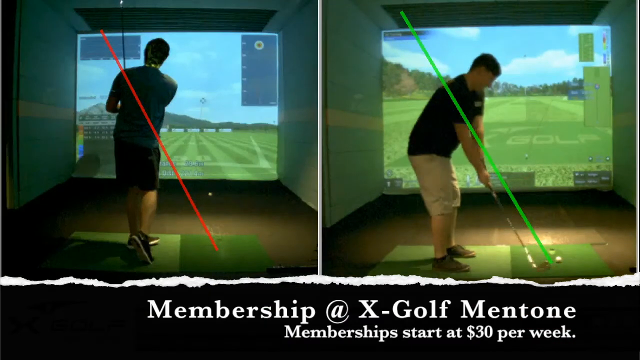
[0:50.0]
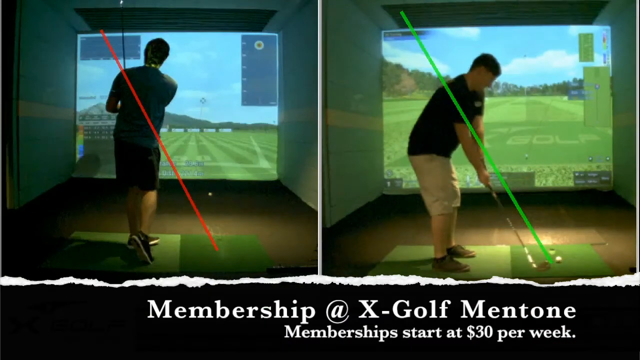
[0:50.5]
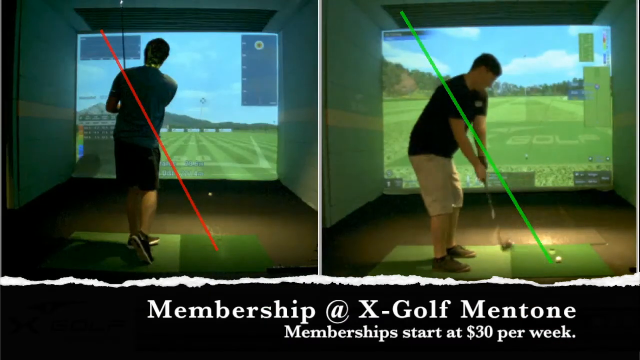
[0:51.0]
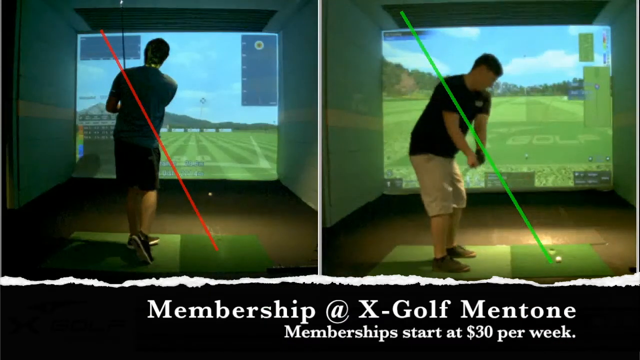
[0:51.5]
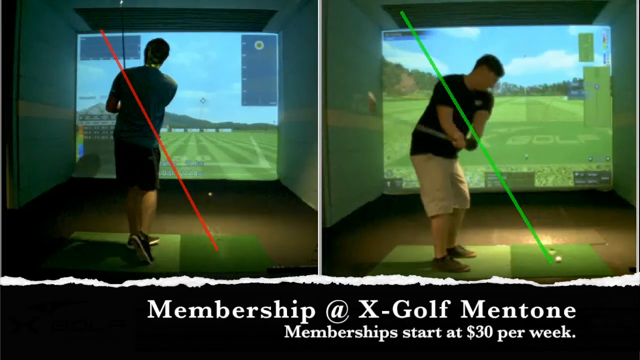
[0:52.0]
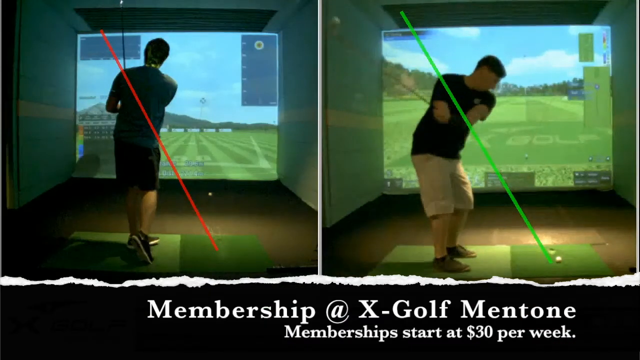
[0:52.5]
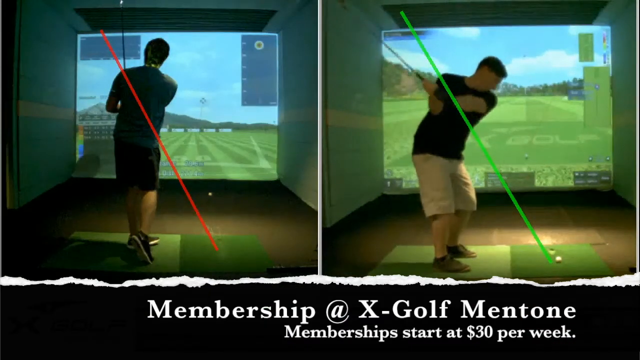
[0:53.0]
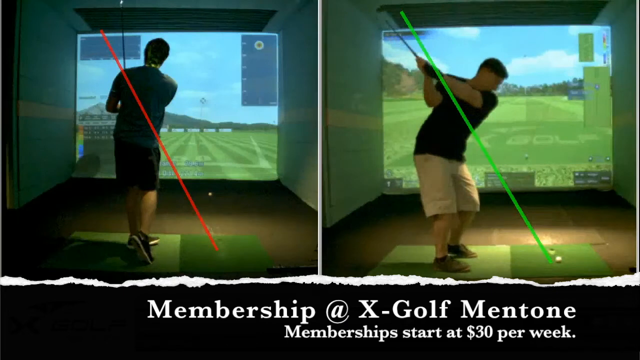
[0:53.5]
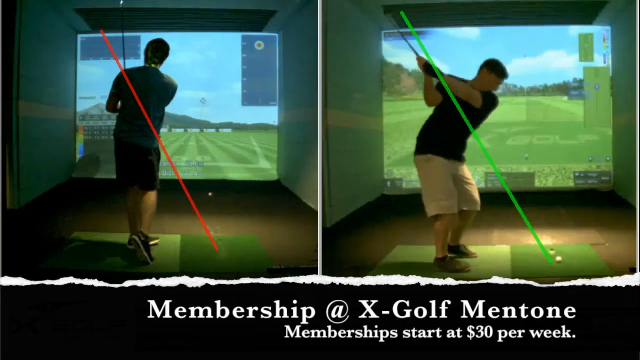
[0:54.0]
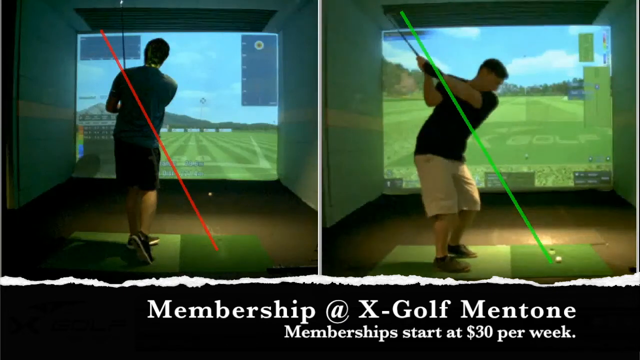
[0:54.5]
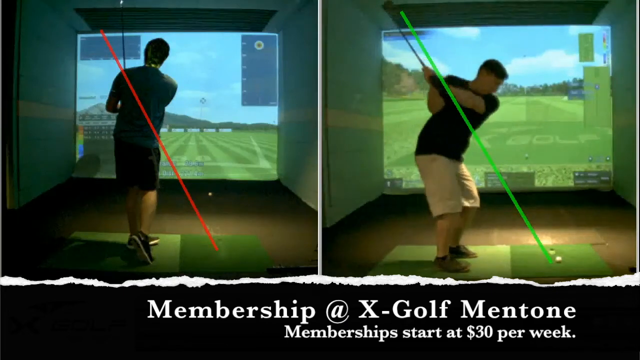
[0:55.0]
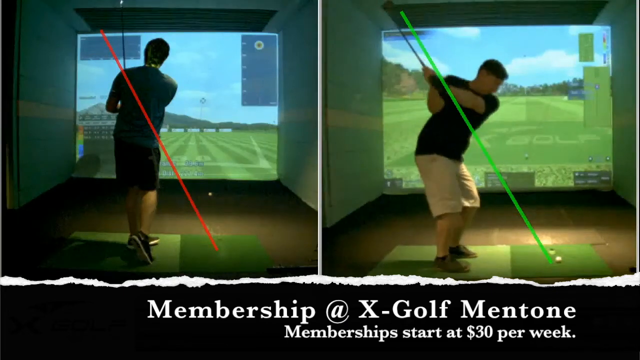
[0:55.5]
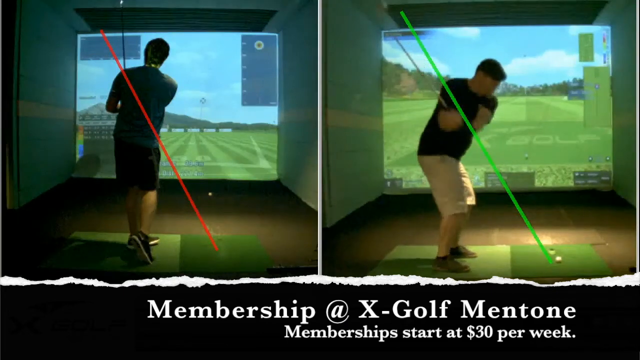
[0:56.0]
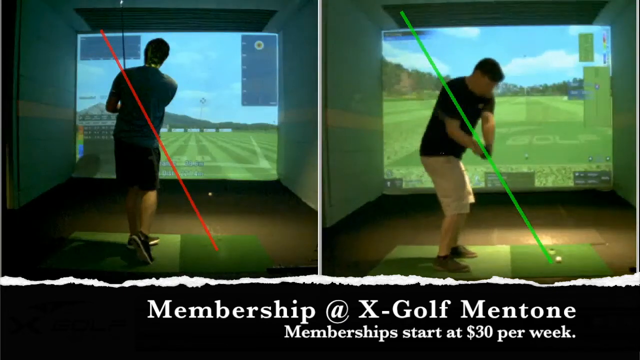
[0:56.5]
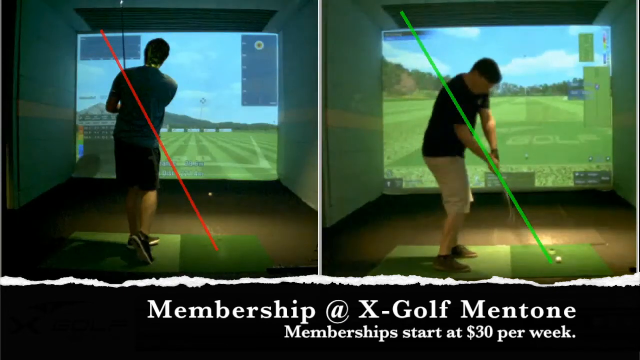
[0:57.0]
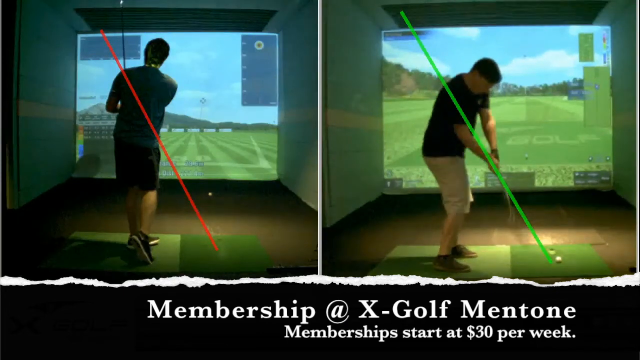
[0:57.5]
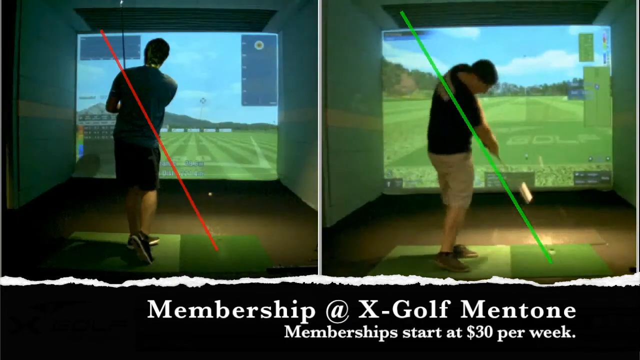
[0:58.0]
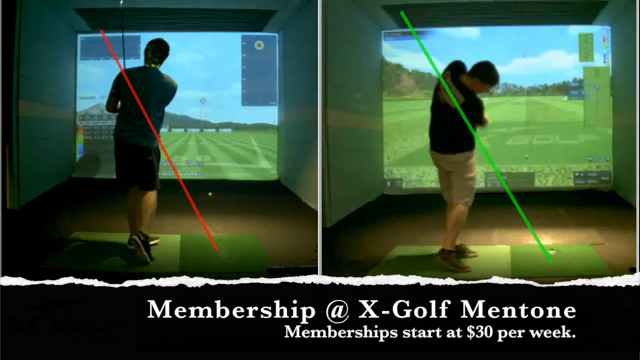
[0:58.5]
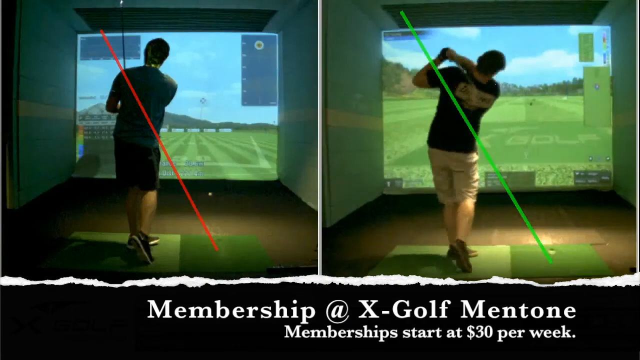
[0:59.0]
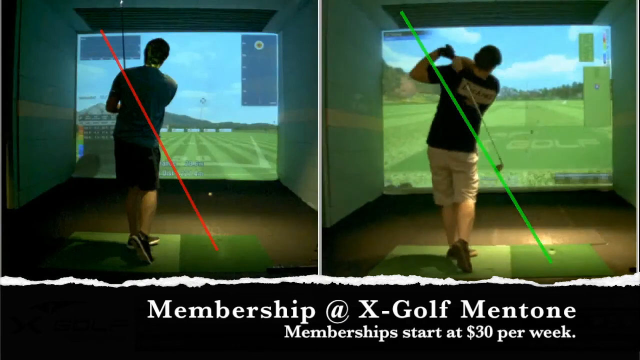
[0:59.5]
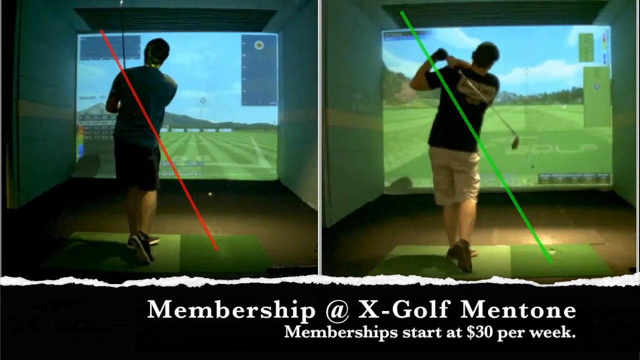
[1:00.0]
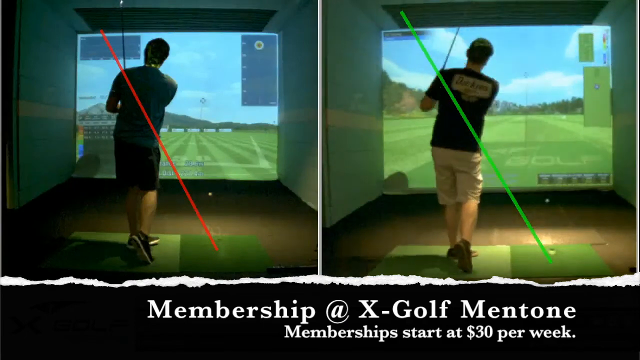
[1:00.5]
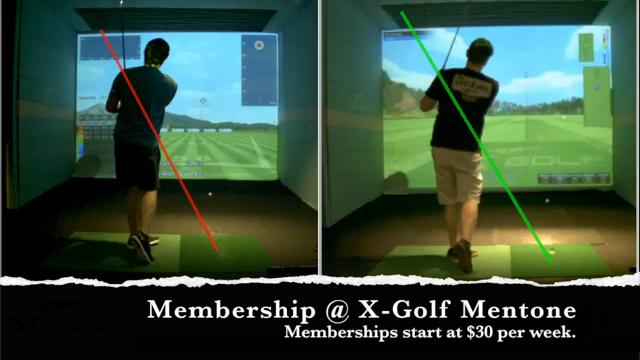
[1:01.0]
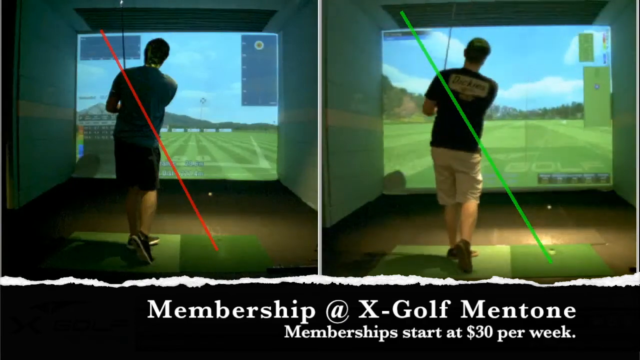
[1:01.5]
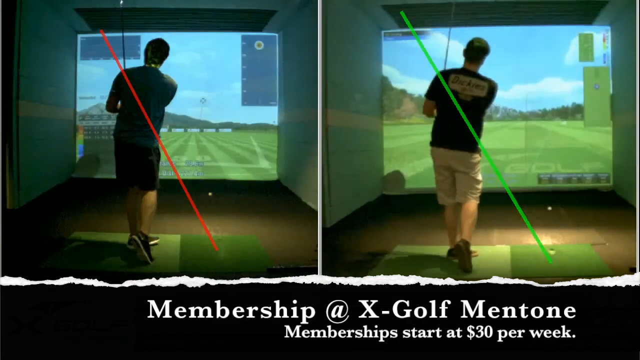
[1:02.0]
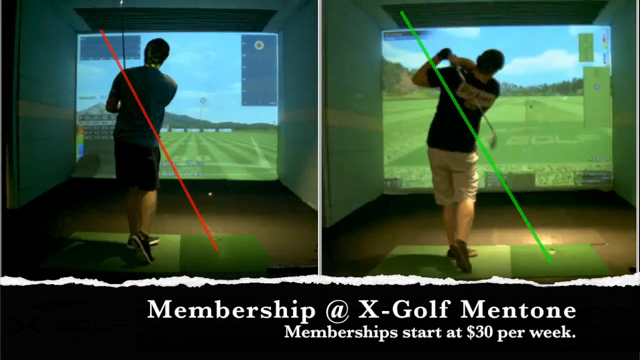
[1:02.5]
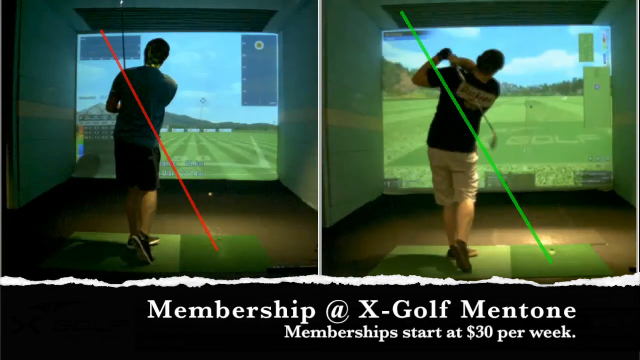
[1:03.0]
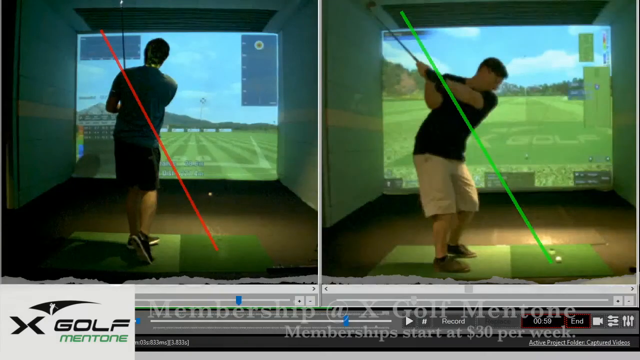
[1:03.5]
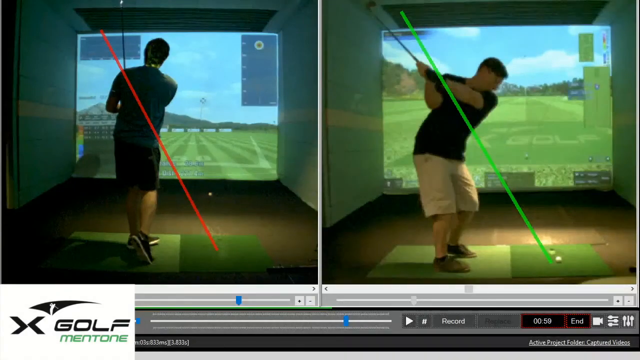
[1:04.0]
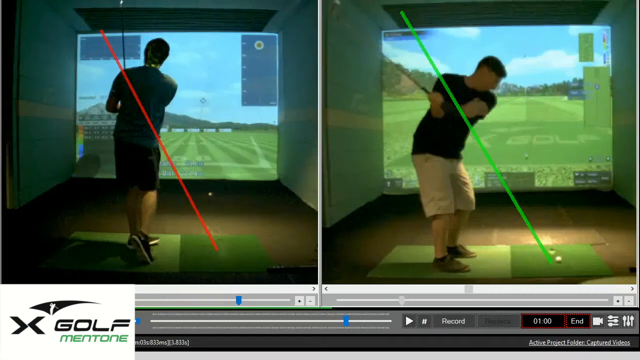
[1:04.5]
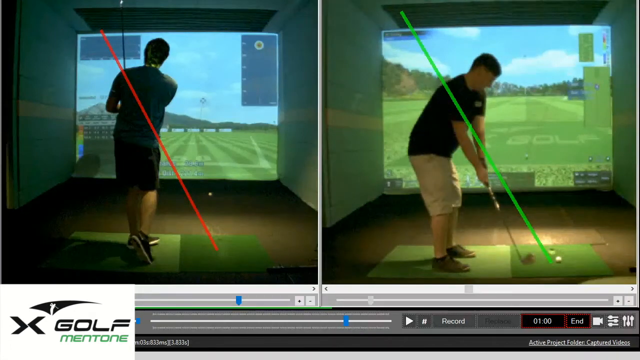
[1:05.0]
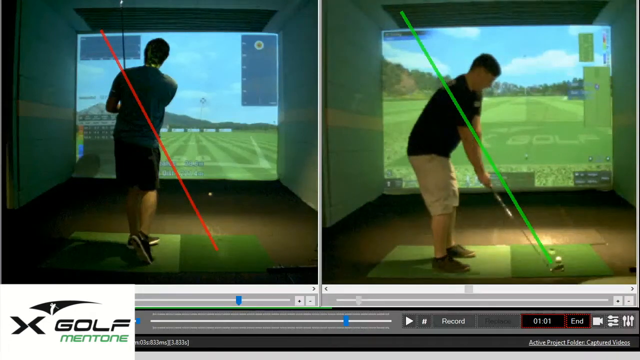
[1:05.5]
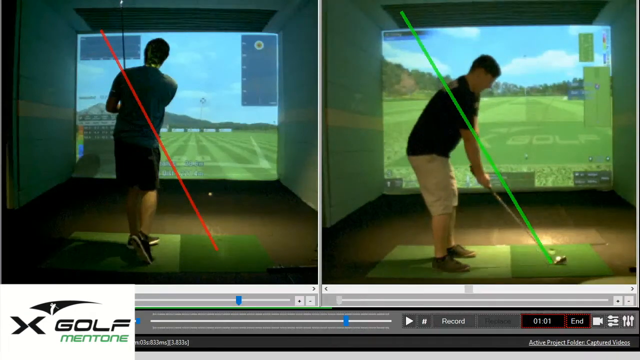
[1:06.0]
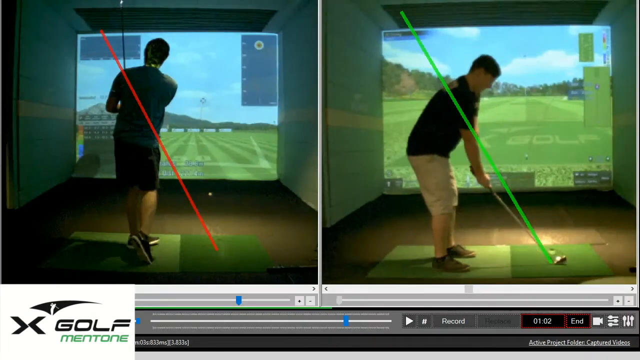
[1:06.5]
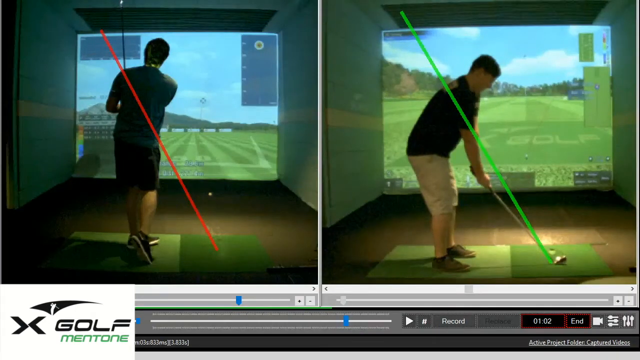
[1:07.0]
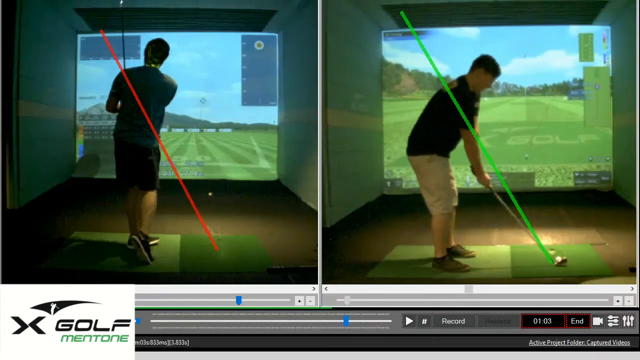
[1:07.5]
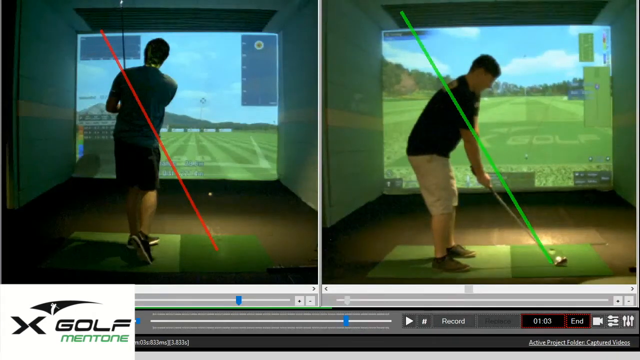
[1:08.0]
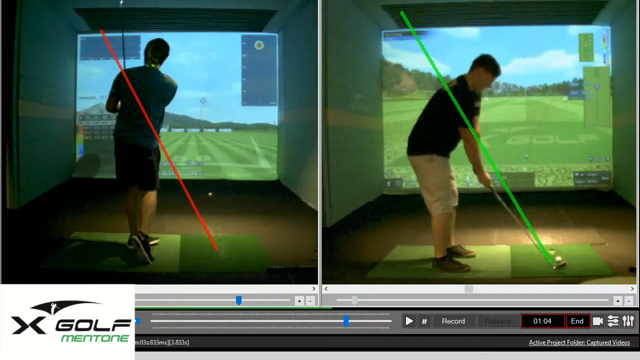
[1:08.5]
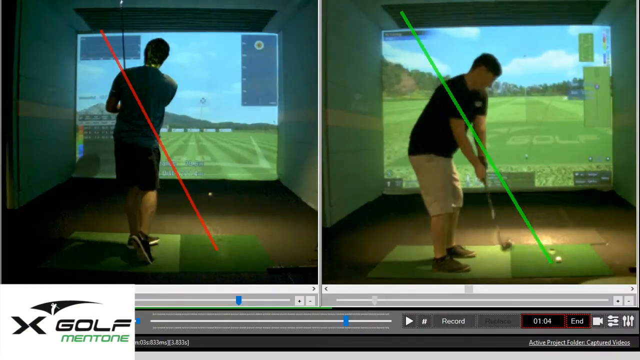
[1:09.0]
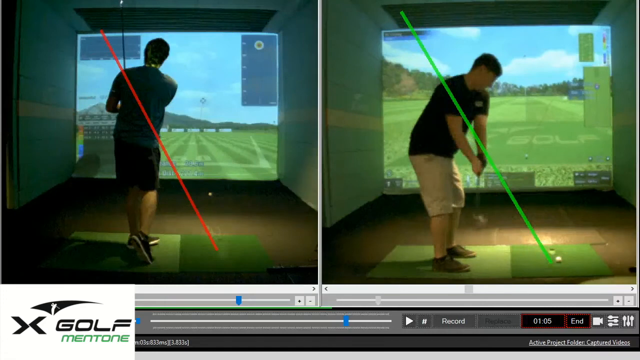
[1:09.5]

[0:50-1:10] Text at the bottom reads "membership at X Golf Mentone. Membership start at $30 per week." On the split screen, the golfer on the left, in a green shirt and black shorts, has a red line going through him as he swings his club. The golfer on the right, in a black shirt and tan khaki shorts, has a green line going through his graphic as he swings, indicating correct form.